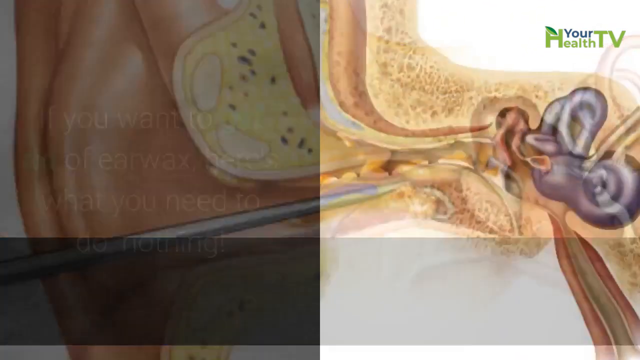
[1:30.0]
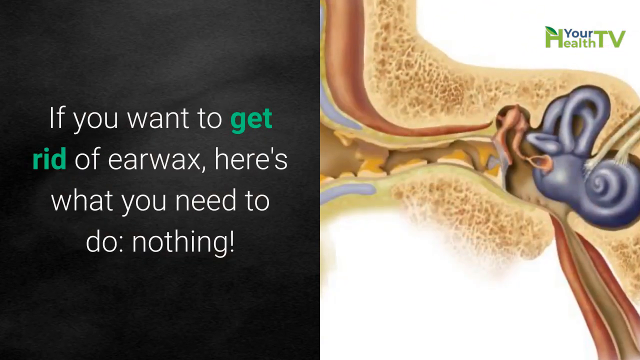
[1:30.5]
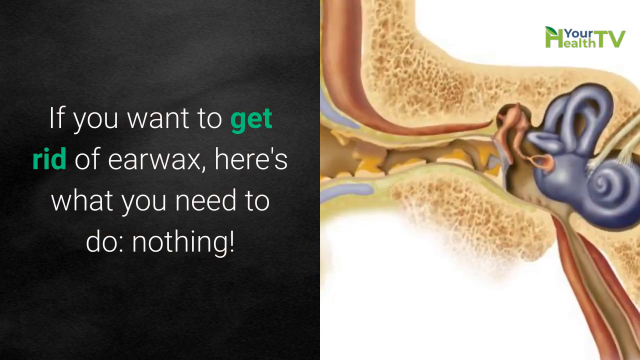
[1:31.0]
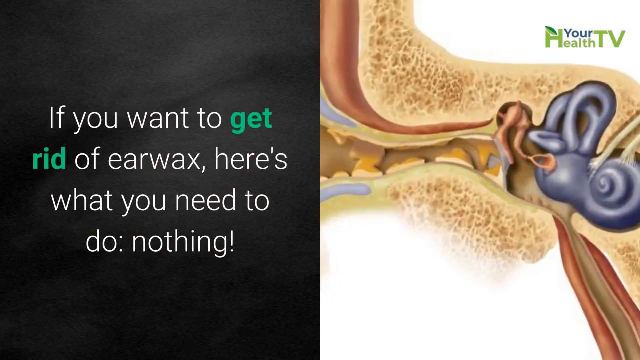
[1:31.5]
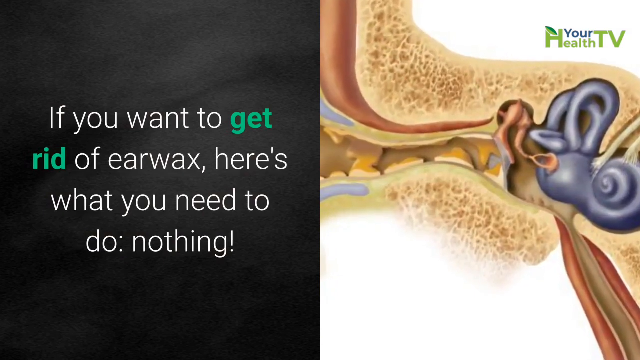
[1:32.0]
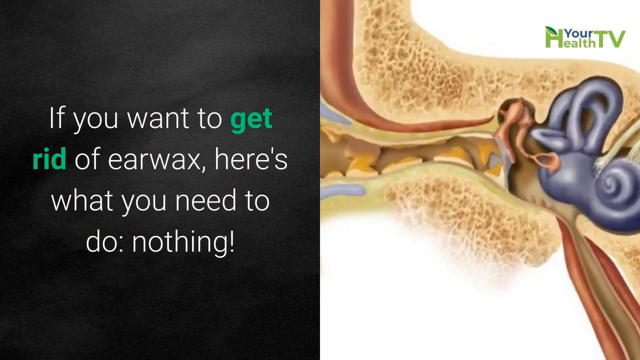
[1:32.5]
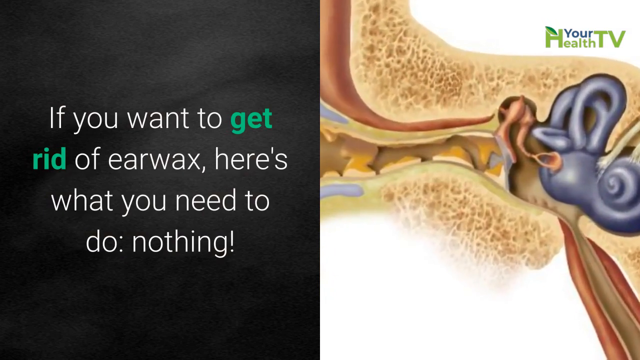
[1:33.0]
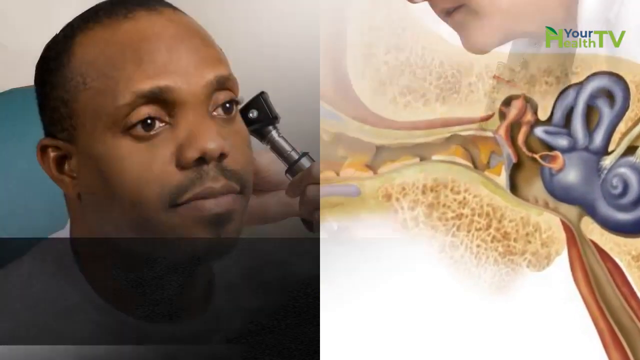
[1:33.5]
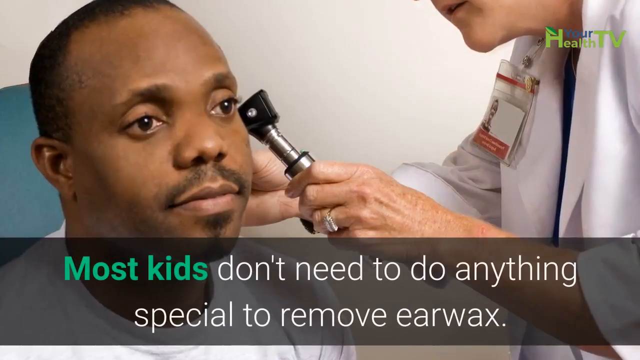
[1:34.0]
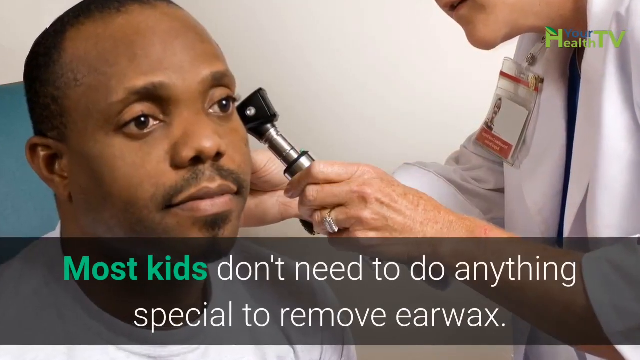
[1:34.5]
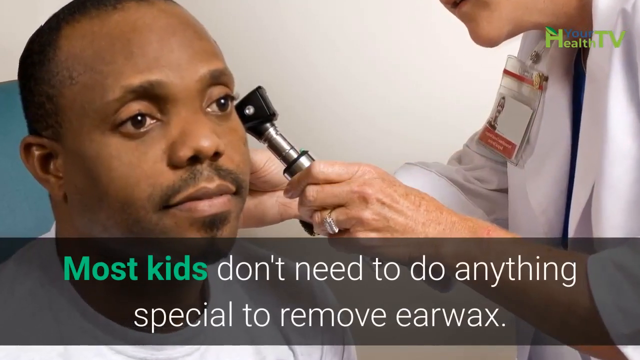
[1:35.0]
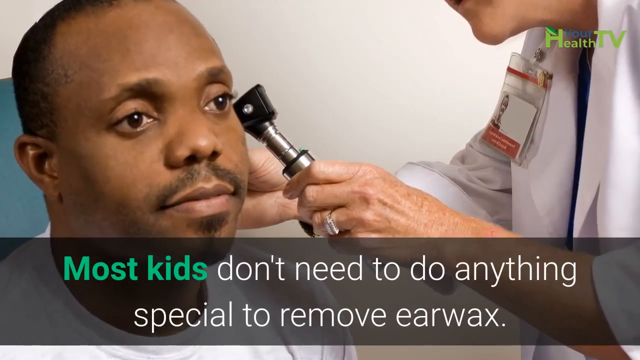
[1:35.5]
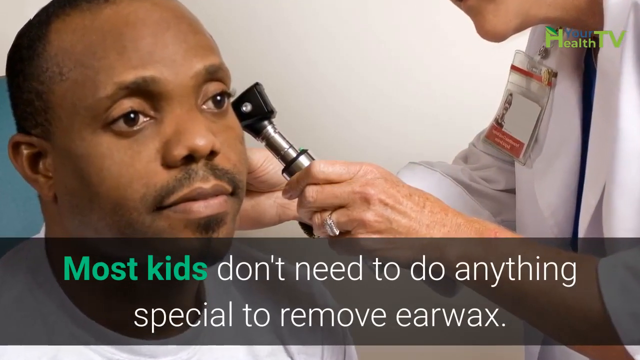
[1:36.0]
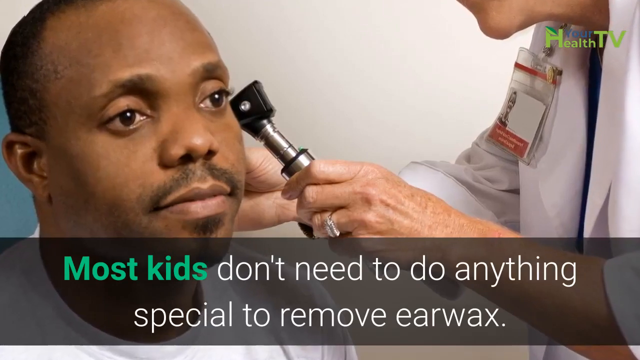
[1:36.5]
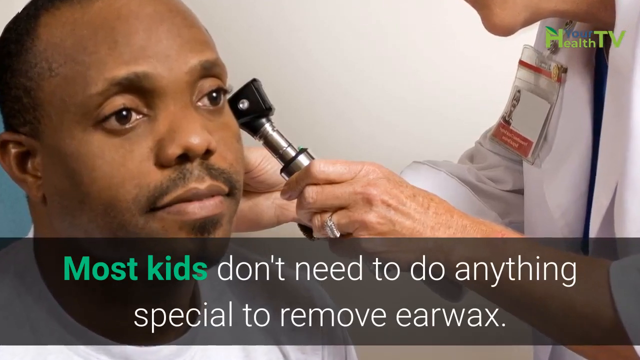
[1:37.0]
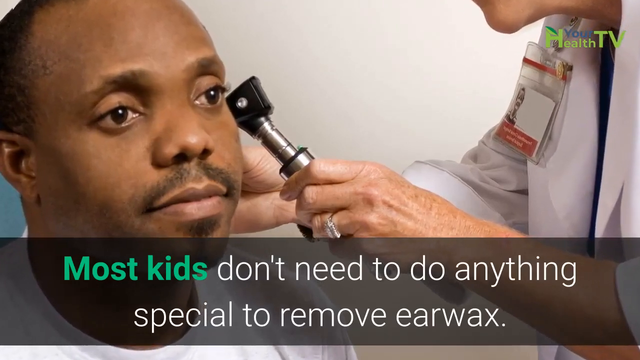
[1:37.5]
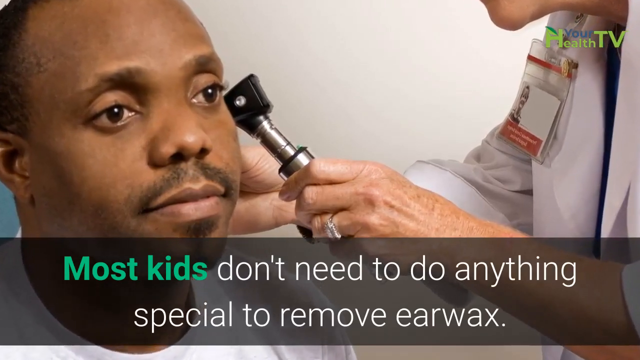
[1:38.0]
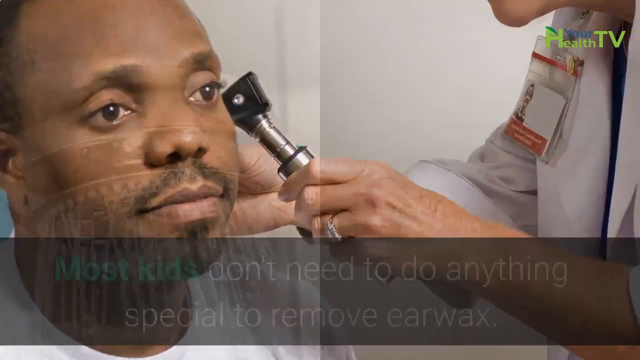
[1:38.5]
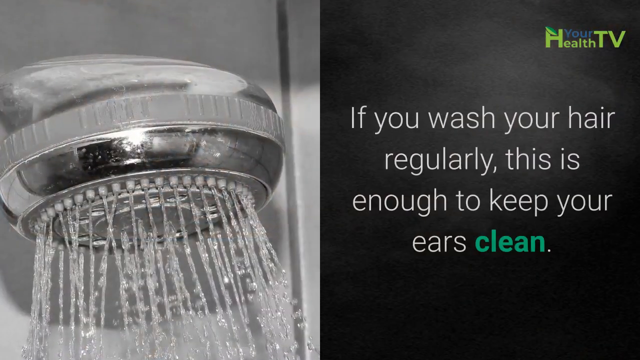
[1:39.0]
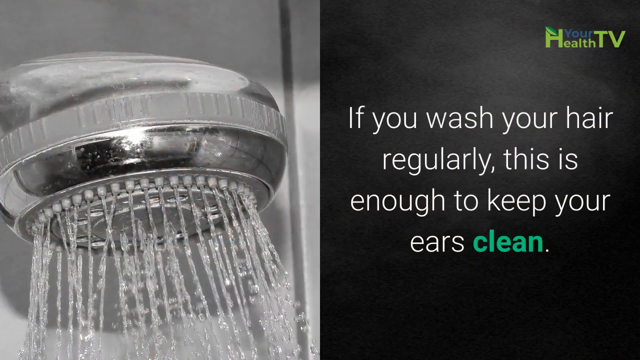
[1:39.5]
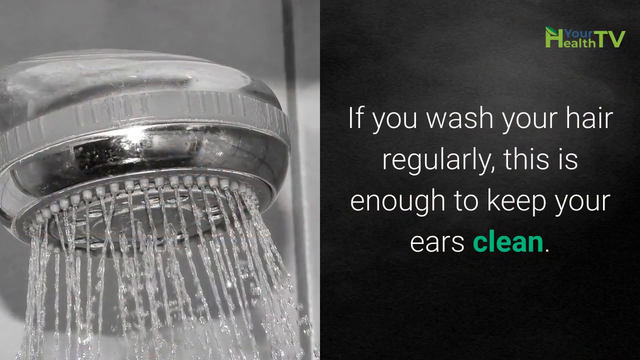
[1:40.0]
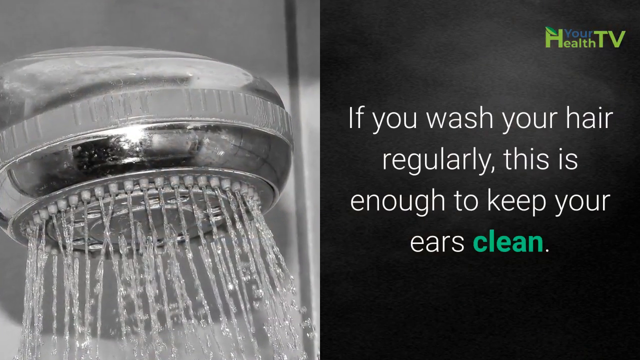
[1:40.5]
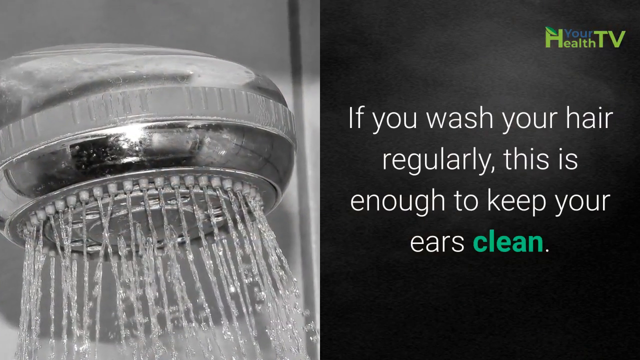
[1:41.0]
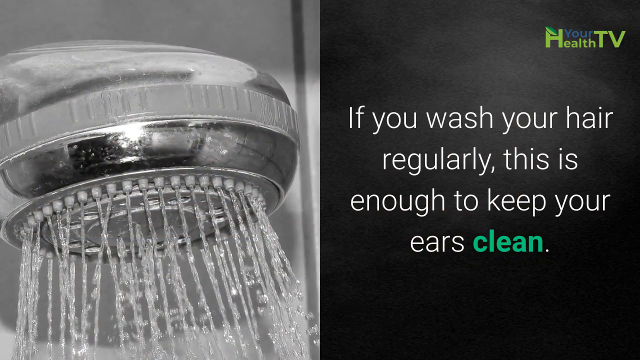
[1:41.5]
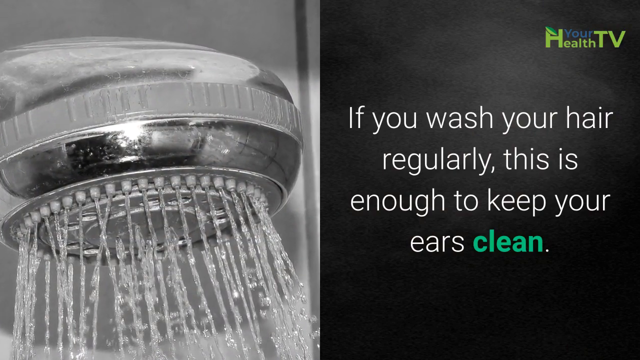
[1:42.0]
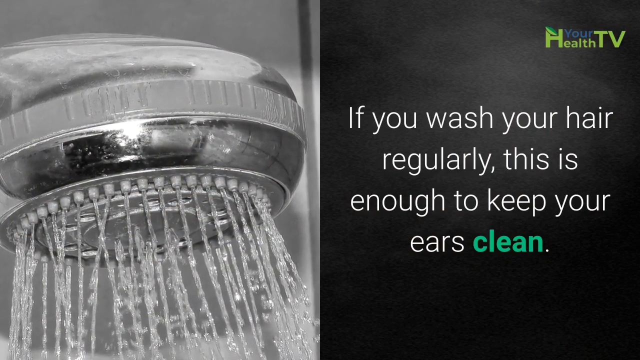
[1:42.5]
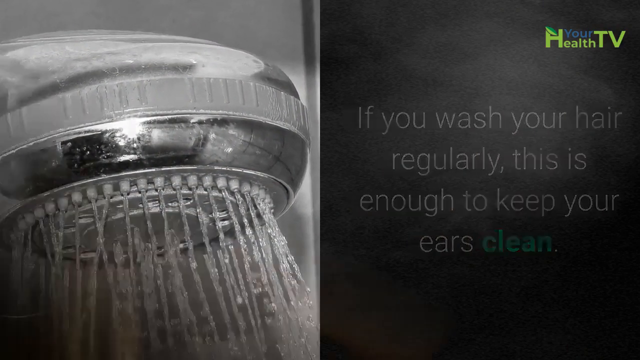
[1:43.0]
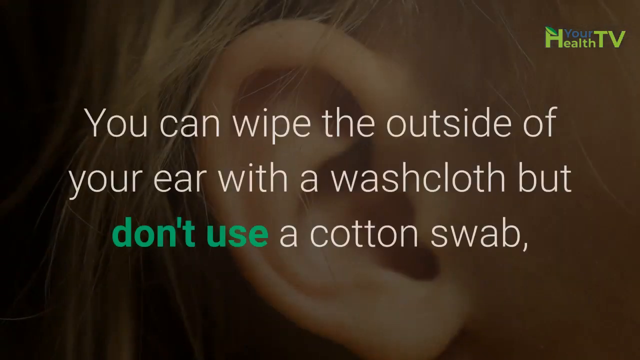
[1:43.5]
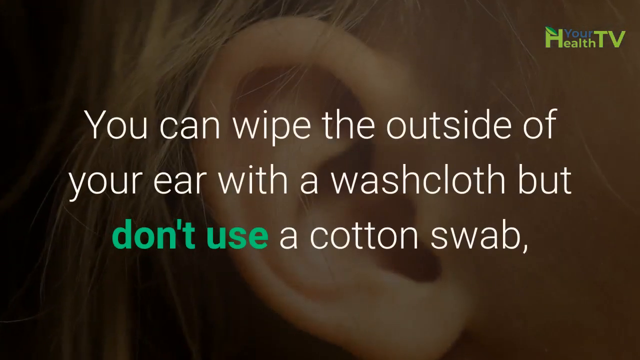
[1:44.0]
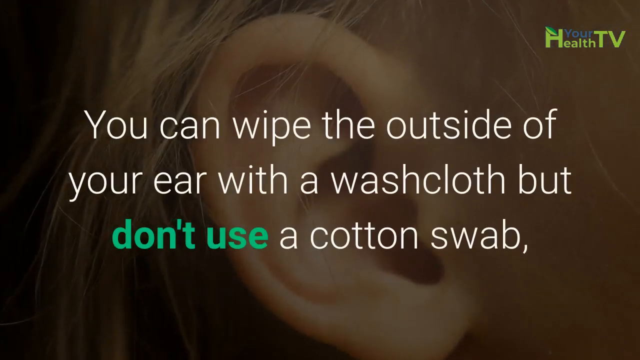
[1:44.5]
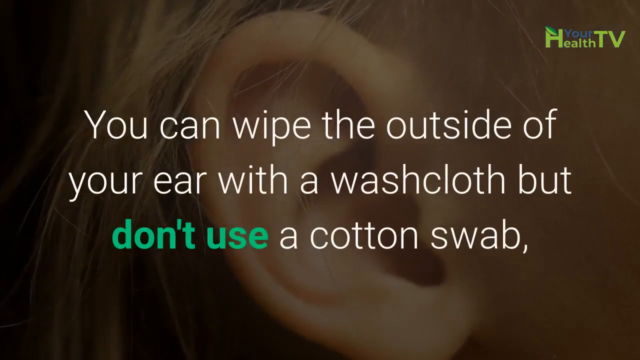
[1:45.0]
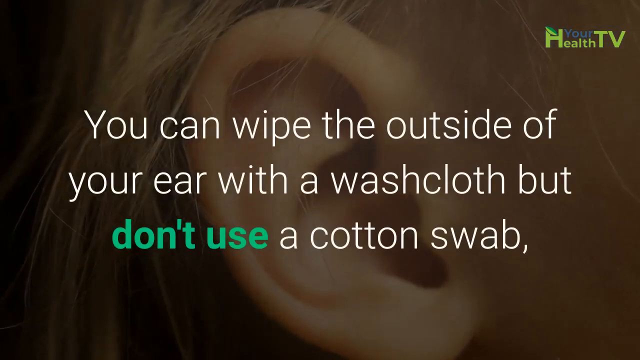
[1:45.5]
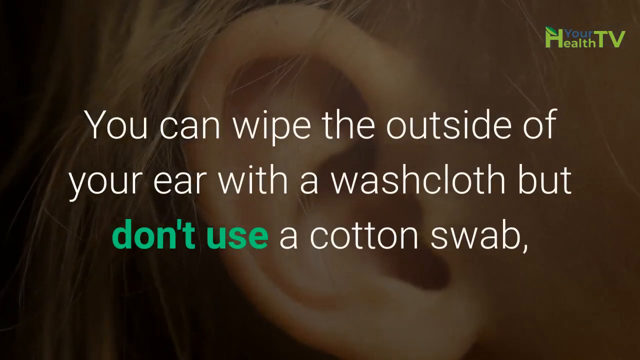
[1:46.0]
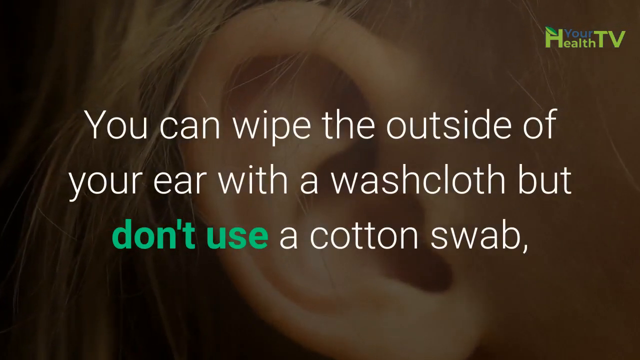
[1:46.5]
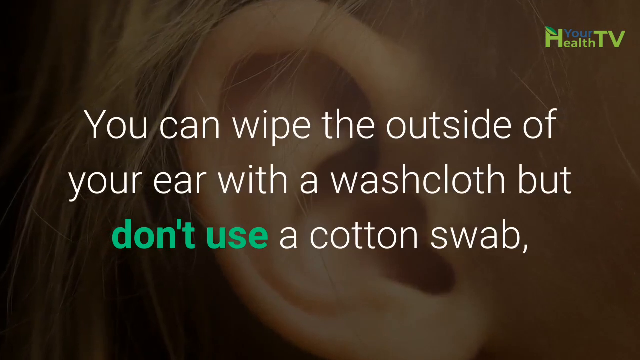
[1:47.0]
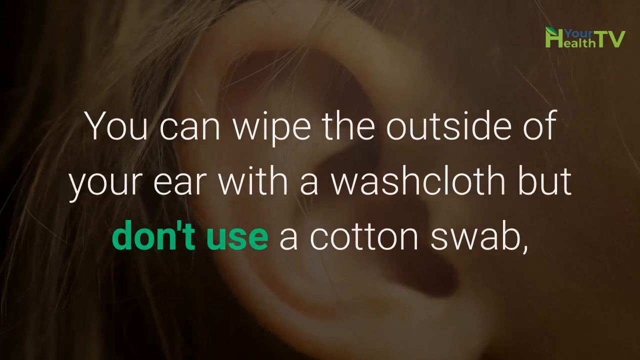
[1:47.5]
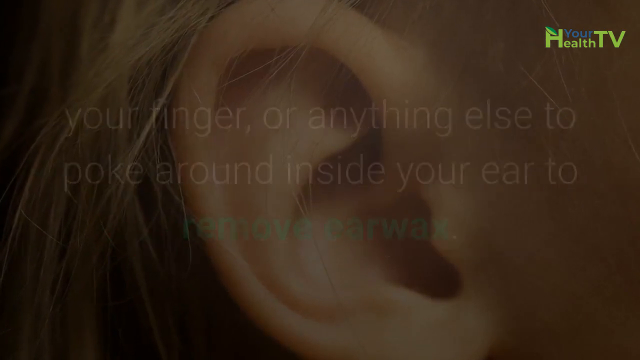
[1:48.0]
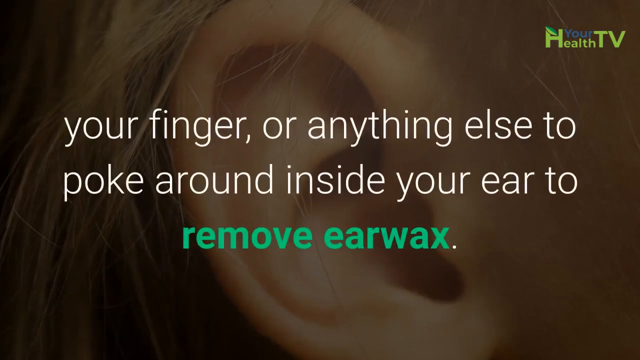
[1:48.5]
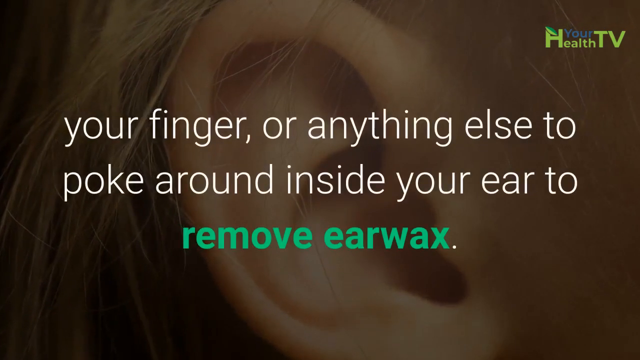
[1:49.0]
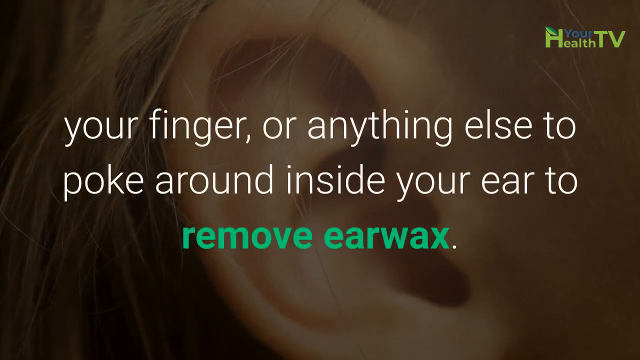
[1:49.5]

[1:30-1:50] The cross-section diagram of the ear is on the right-hand side of the screen, and text on the left reads "if you want to get rid of earwax, here's what you need to do." The picture of the patient shown earlier appears again: an African-American man with a short haircut, small ears, a mustache and a little goatee, sitting in a teal chair in a doctor's office and looking to the right. The older doctor stands on the right-hand side of the screen, one hand holding the ear on the side of his head that cannot be seen because he is angled somewhat to the right, while the left hand holds a tool to look in the patient's ear. Text reads "most kids don't need to do anything special to remove earwax." Next, an image on the left shows a shower head with water running, with text on the right: "if you wash your hair regularly, this is enough to keep your ears clean." The close-up of an ear seen before appears, with the text "you can wipe the outside of your ear with a washcloth, but don't use a cotton swab, your finger, or anything else to poke around inside your ear to remove earwax."